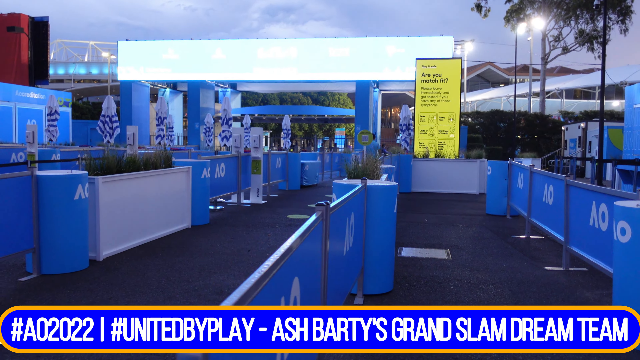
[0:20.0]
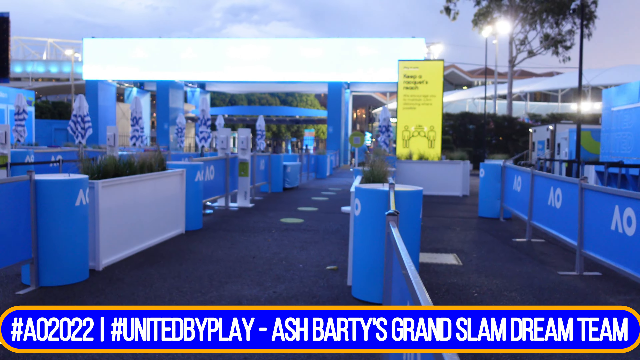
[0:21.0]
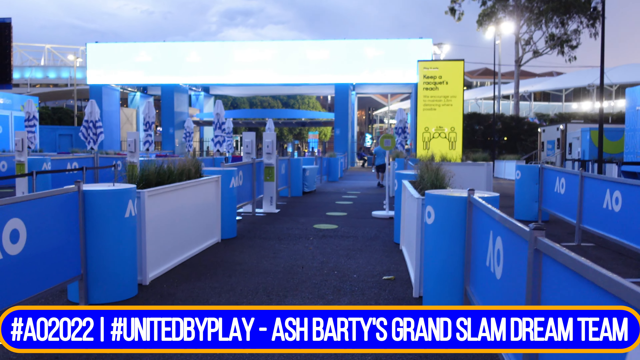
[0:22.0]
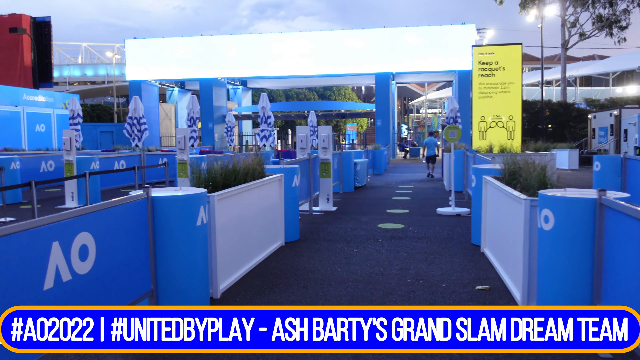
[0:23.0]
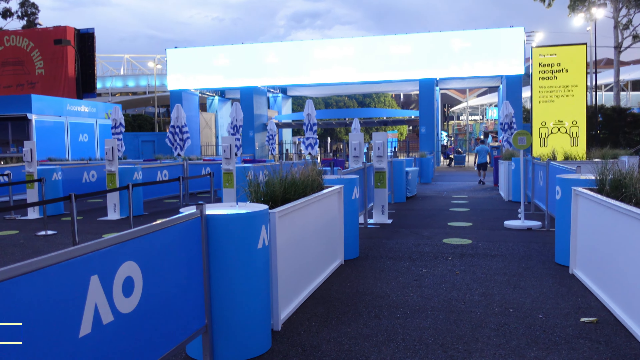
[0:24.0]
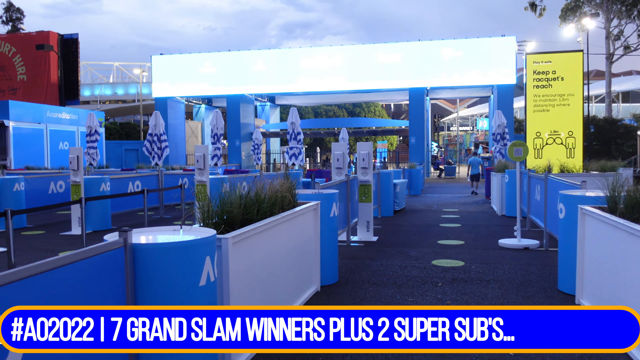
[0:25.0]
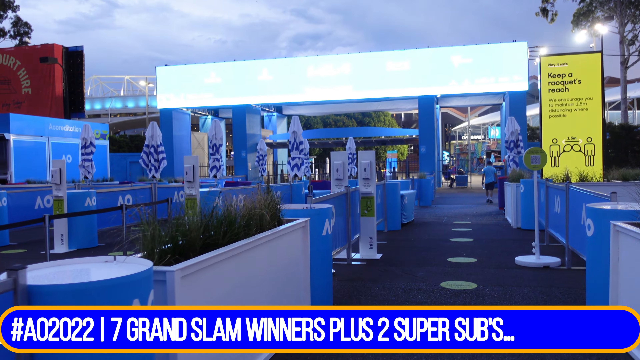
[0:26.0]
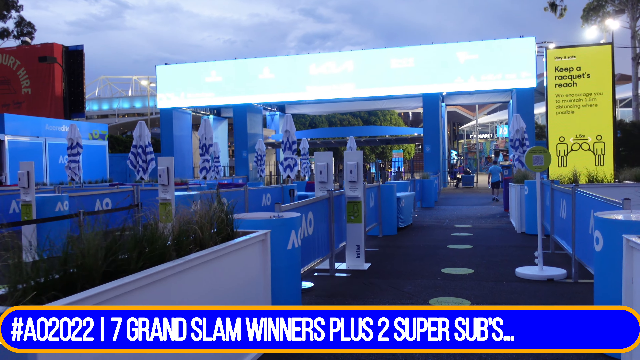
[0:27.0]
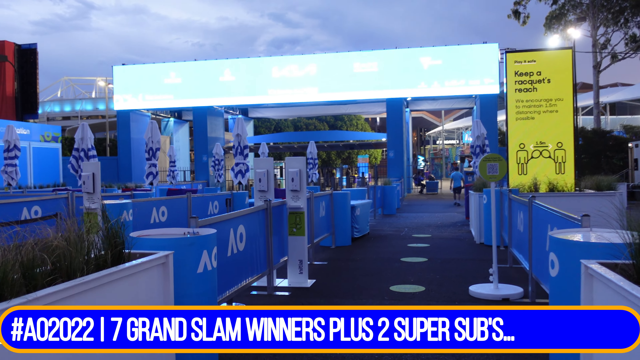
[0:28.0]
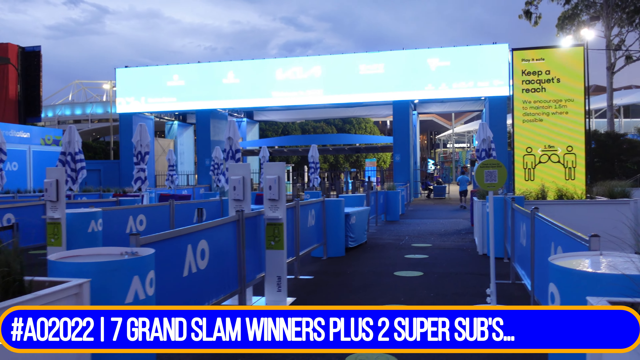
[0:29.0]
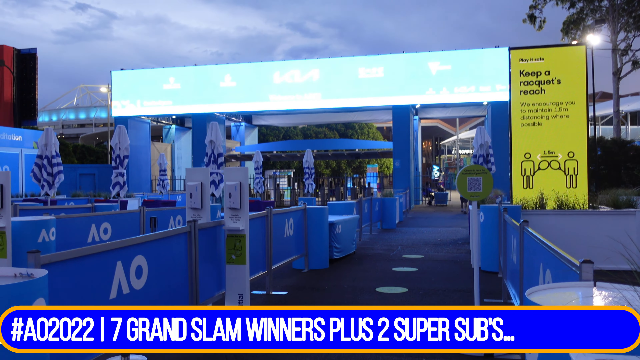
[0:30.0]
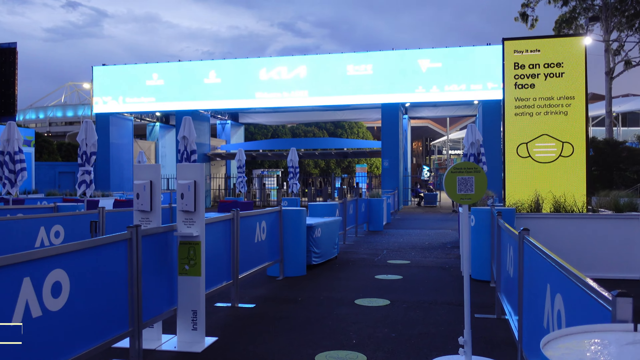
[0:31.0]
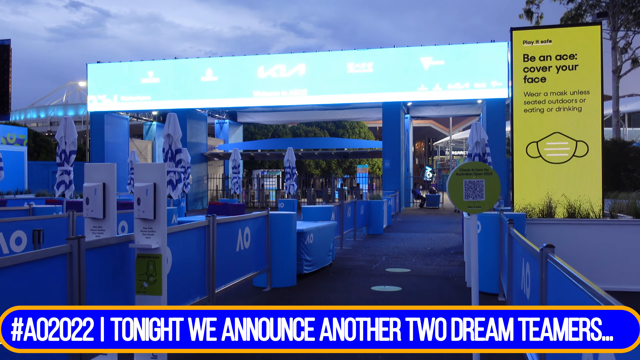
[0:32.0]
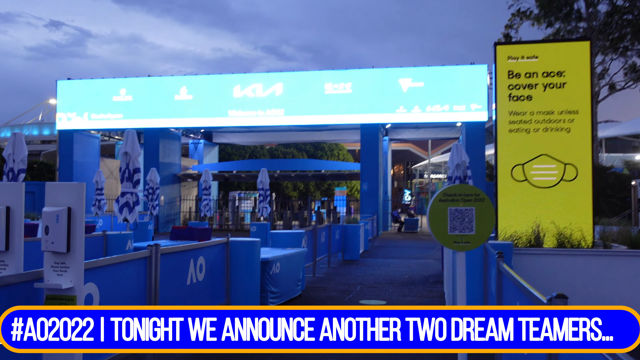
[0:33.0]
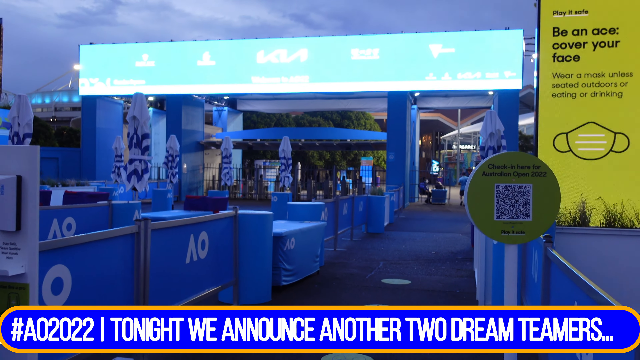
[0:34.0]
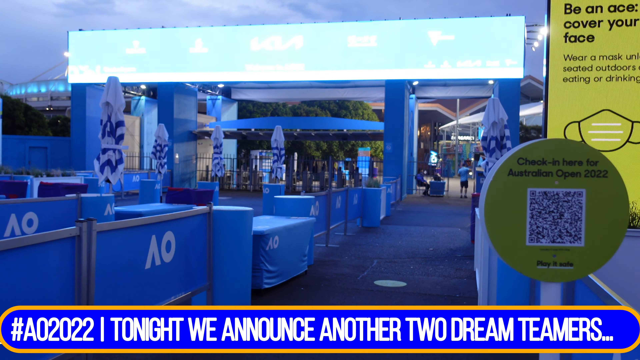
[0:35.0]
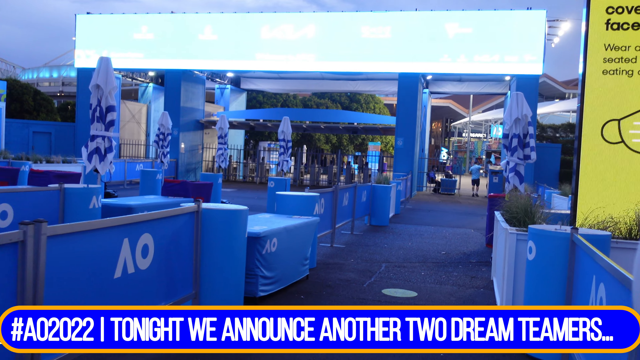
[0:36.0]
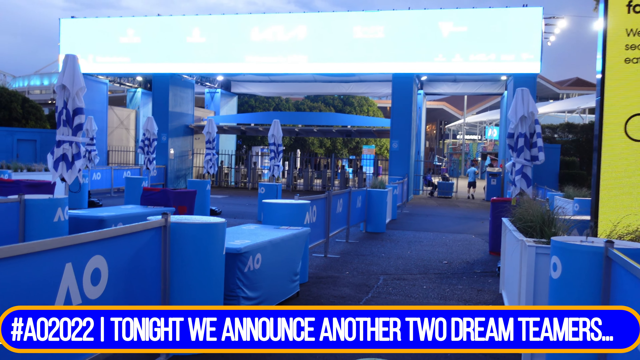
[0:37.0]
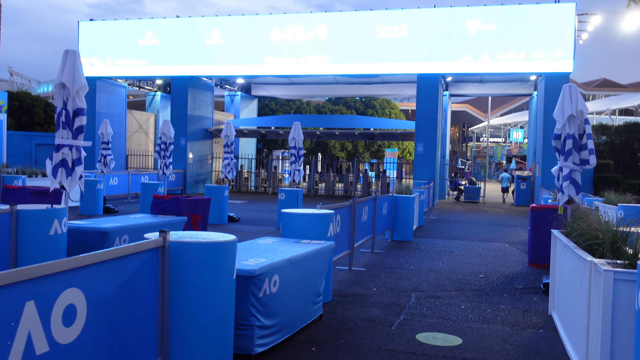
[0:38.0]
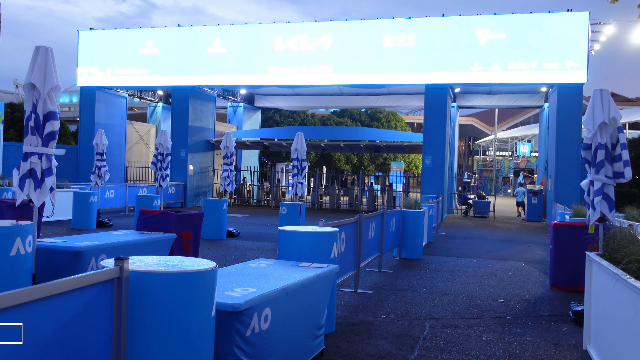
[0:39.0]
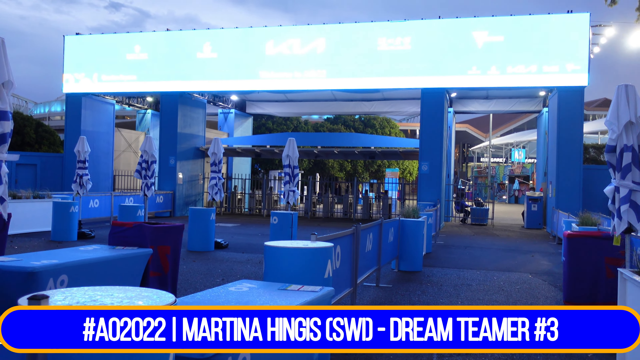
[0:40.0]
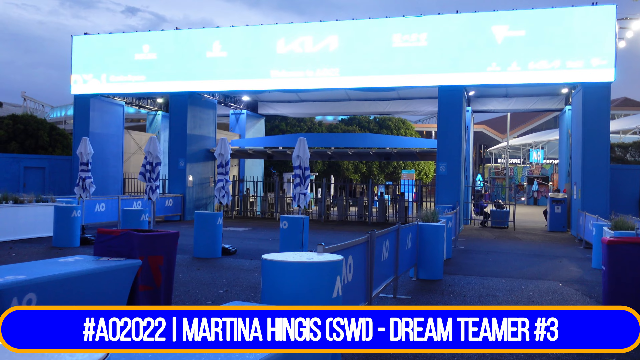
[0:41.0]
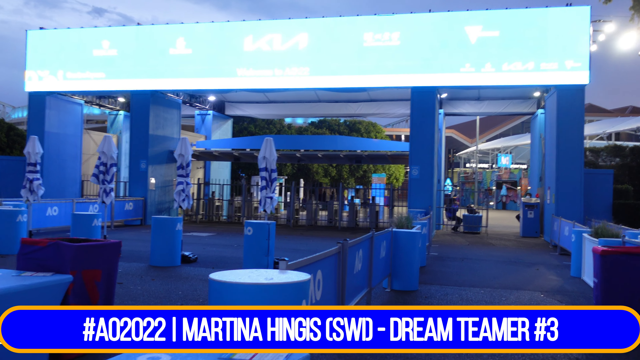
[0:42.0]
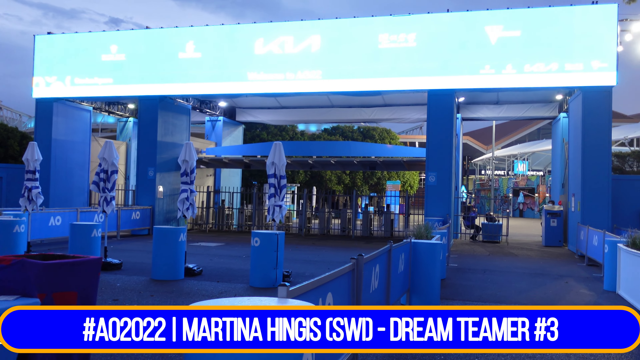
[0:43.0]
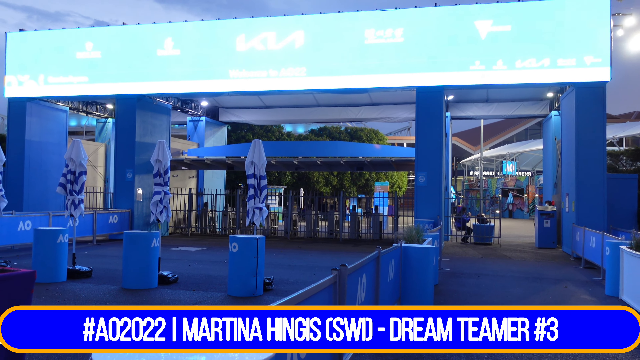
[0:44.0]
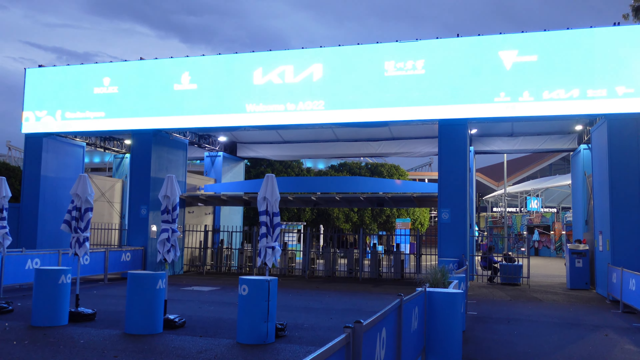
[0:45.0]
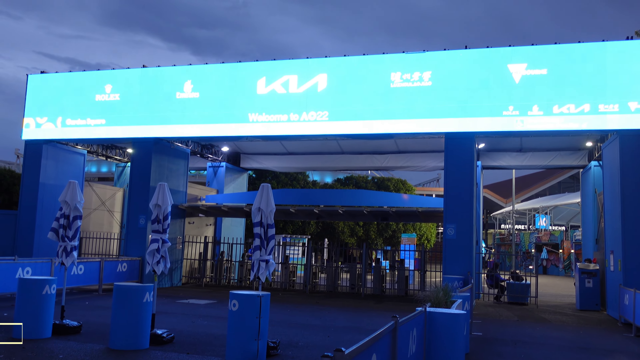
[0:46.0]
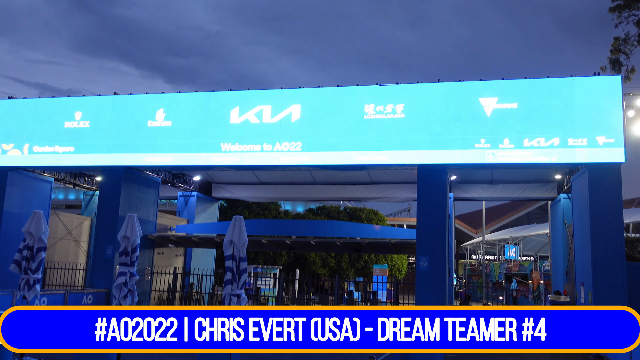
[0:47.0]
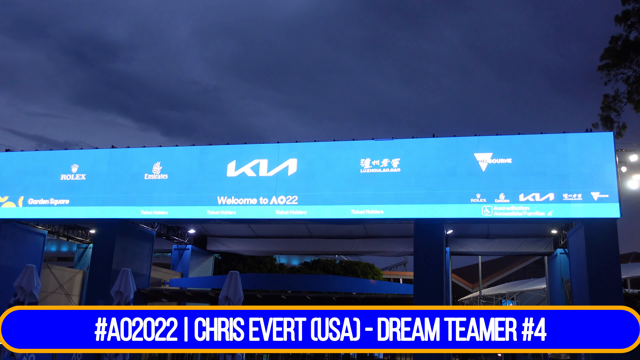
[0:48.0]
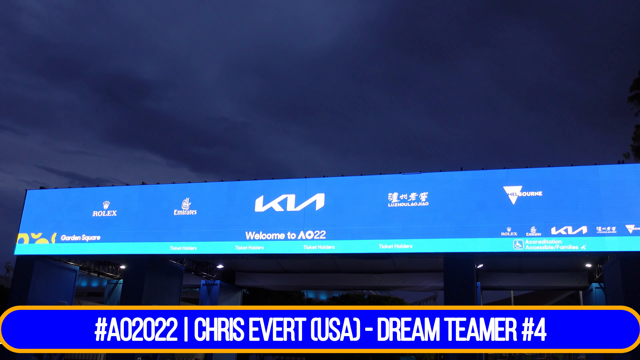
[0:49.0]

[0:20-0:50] A banner at the bottom reads "#A02022 #united by play Ash Barty's Grand Slam dream team", with A02022 probably standing for Australian Open 2022. There are blue lines, maybe for a check-in process, and about nine to ten white and blue umbrellas in the shot. The person holding the camera walks around; somebody is sitting at what may be a check-in counter, and another person in a blue shirt walks towards the check-in counter. A poster near the check-in counter reads "Play it safe be an ace cover your face wear a mask unless seated outdoors or eating or drinking". There is a little stand with a QR code, and two sanitizer stations are visible at the check-in area. The camera moves slowly towards the check-in area, showing surroundings that are mostly blue. A large screen goes across the check-in counter and reads "Welcome to", with sponsors listed such as Rolex and Emirates. It also shows that this is at the Garden Square, which is shown on the banner as well.